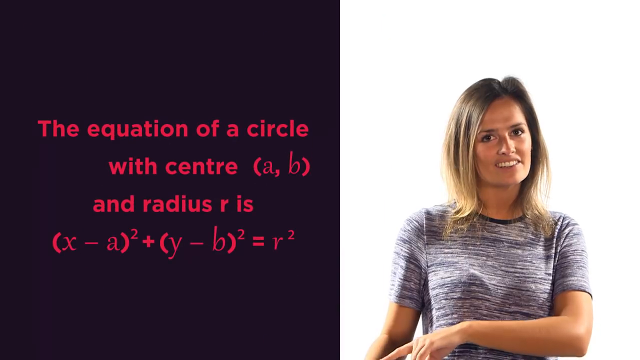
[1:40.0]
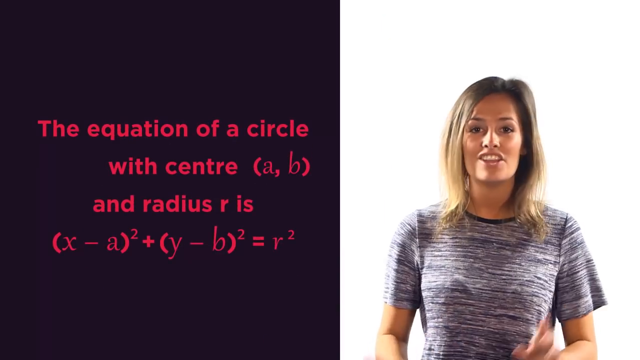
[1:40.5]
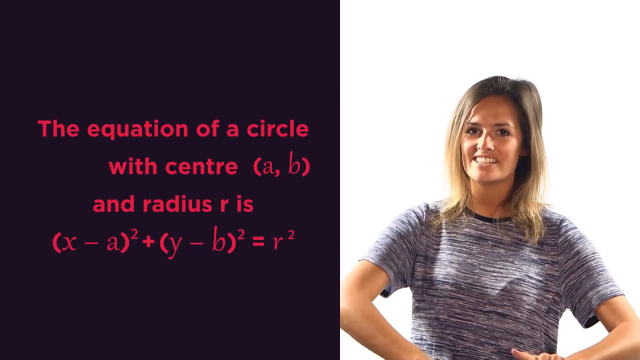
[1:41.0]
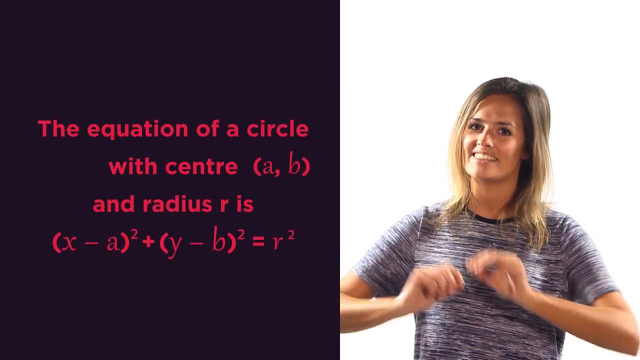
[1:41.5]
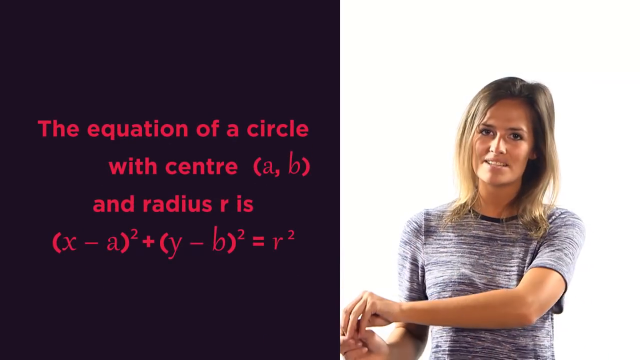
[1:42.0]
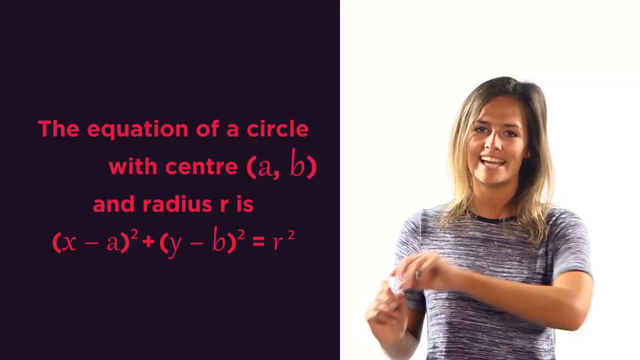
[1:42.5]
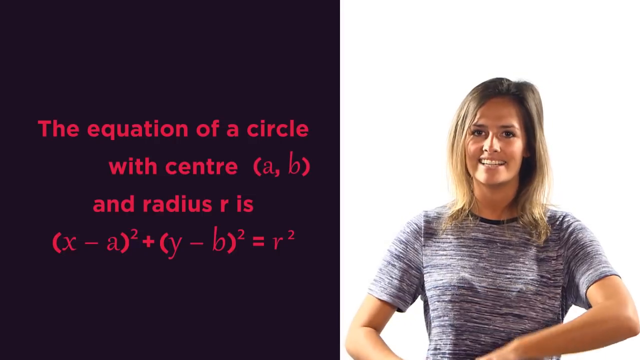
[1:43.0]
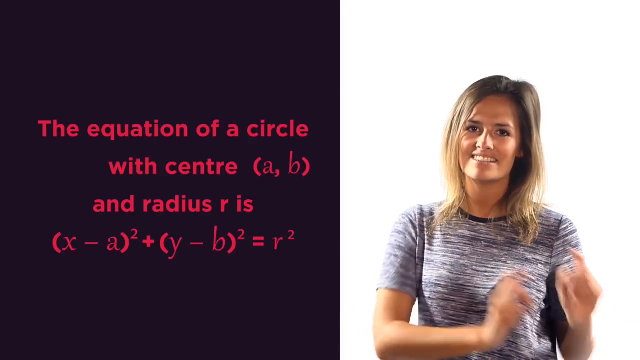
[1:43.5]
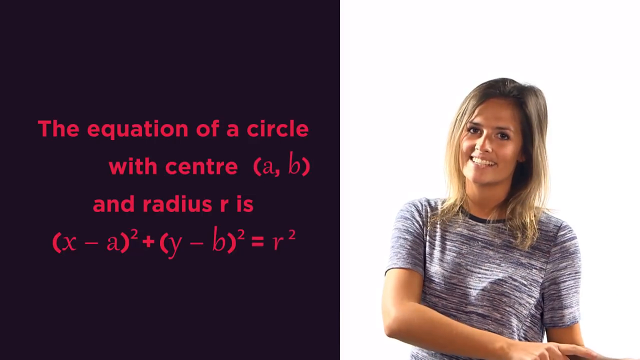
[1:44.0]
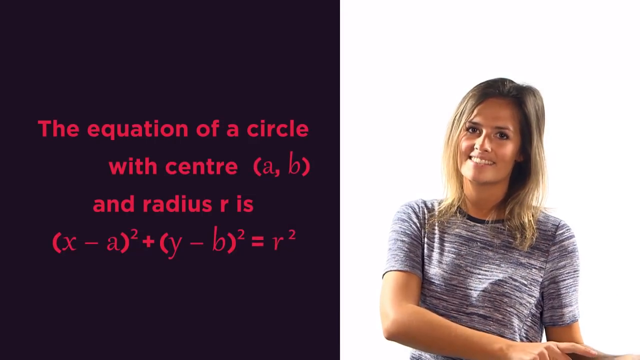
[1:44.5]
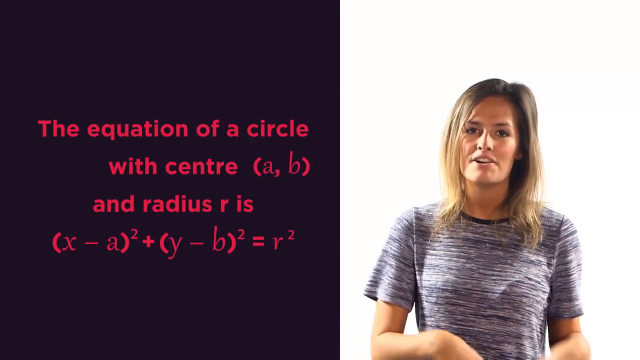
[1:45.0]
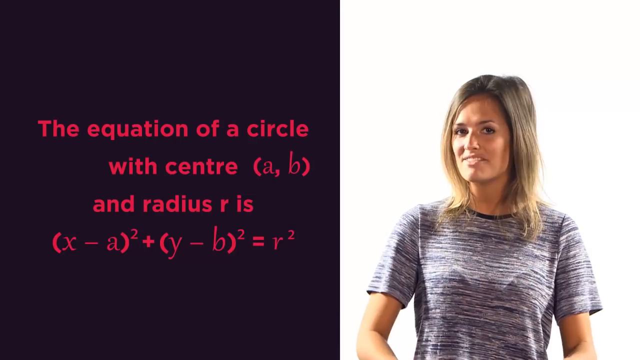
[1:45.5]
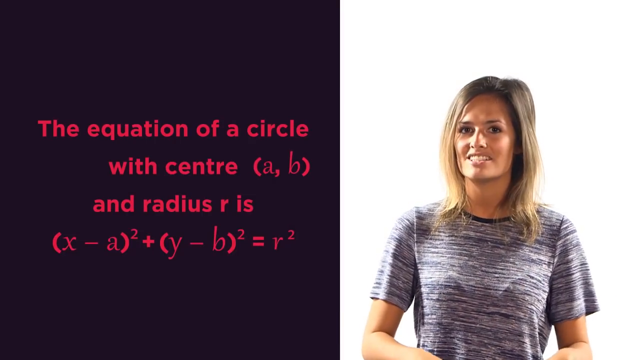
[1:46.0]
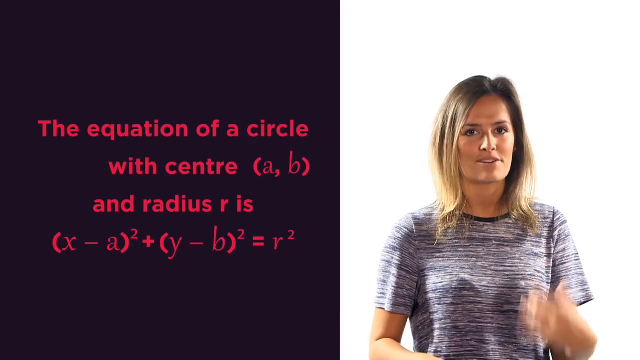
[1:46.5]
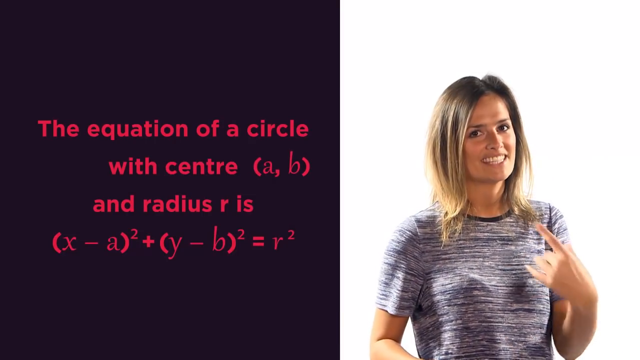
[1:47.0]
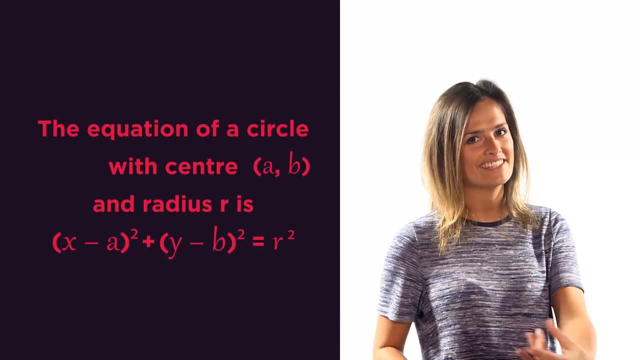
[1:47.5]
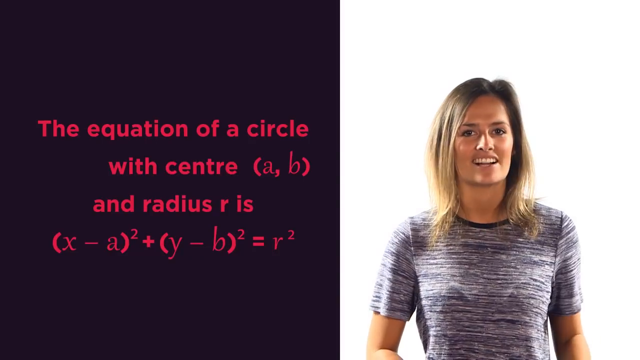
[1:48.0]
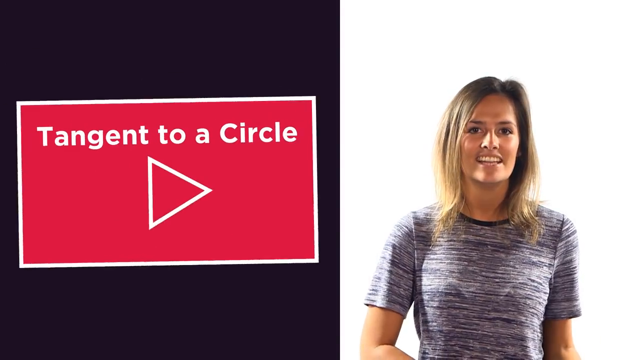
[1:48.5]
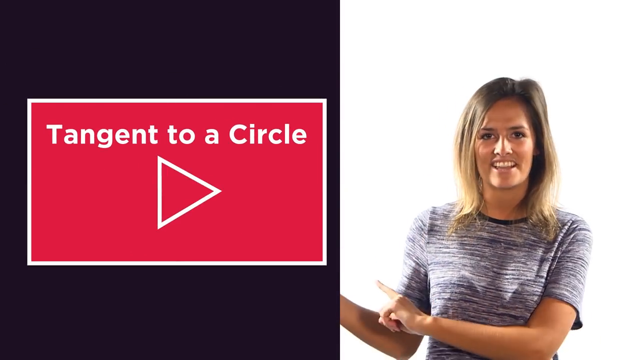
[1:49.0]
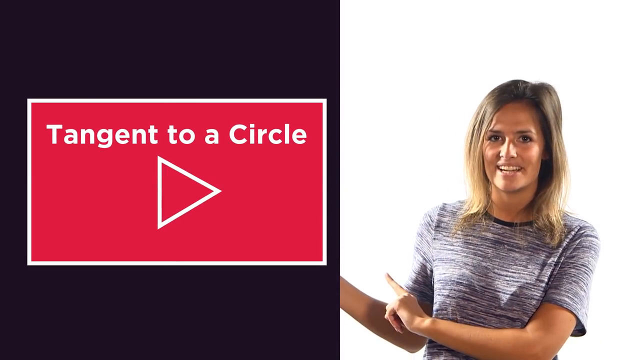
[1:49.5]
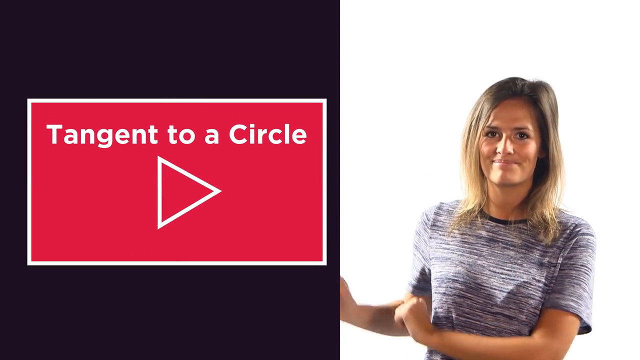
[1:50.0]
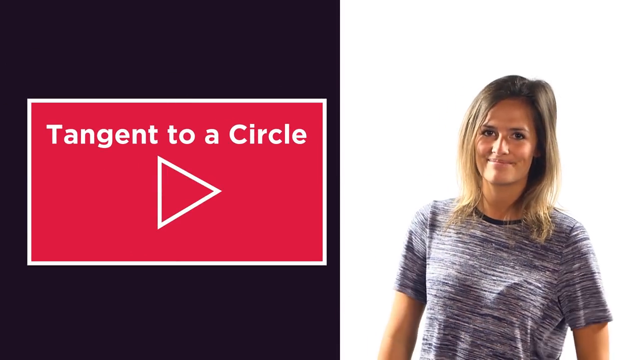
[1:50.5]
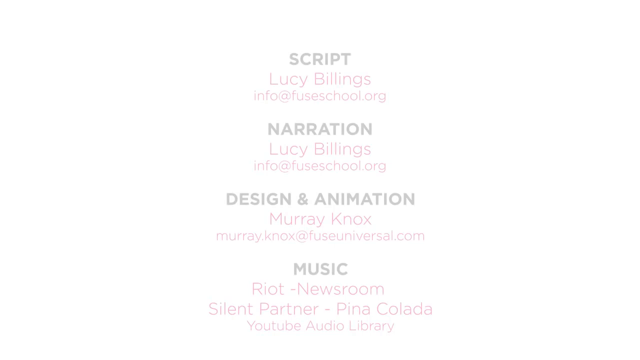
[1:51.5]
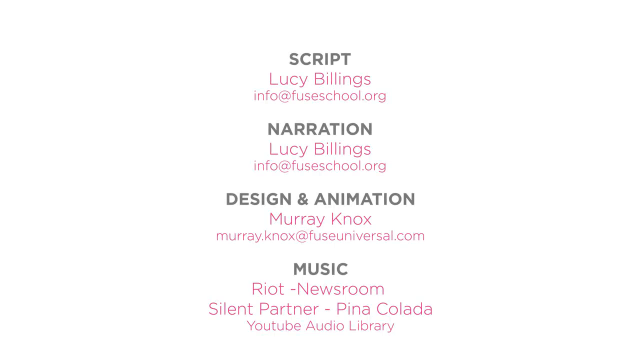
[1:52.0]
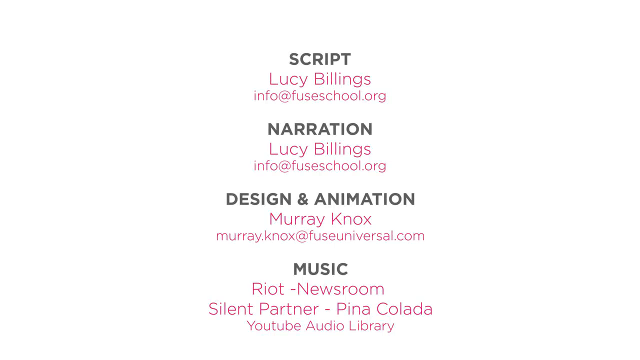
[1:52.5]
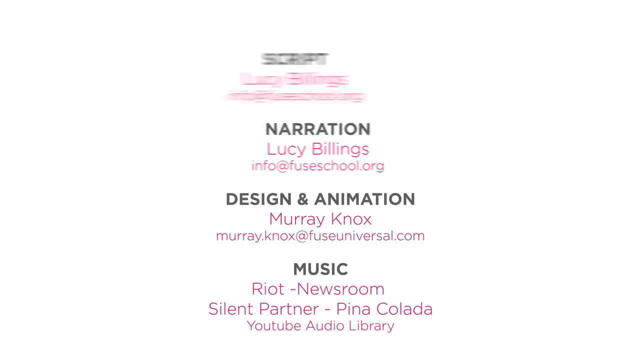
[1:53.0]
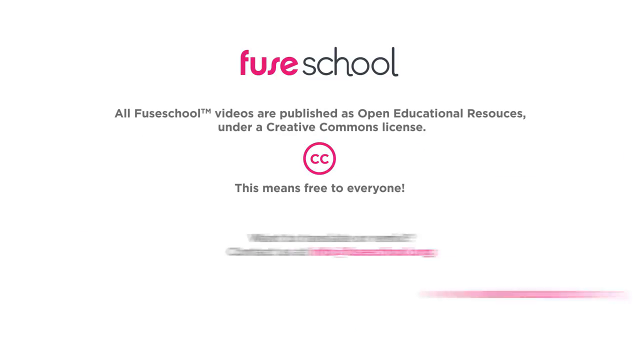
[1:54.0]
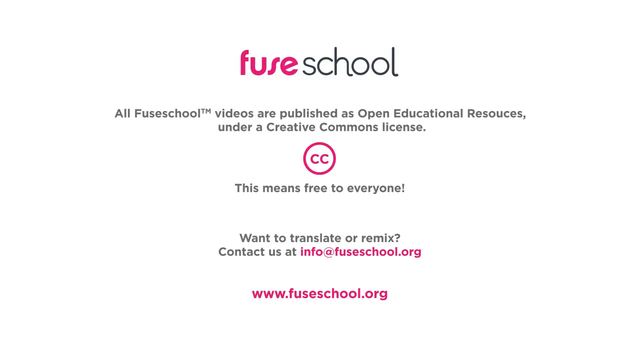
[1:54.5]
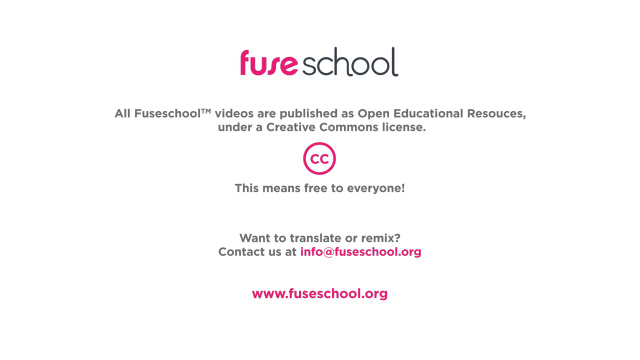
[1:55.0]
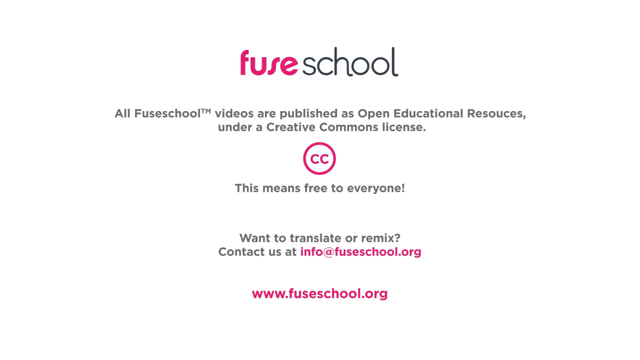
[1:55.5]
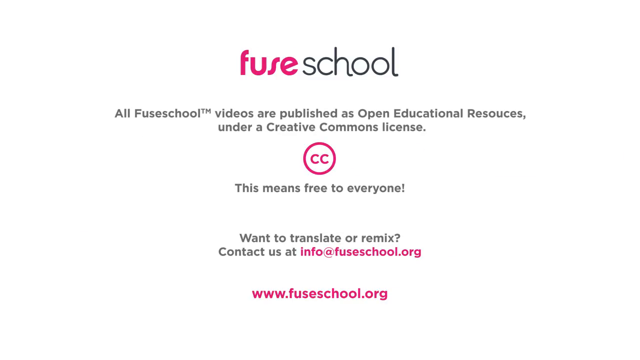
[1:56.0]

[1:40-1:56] The split screen continues: on the left, against a black background, red print reads "the equation of a circle with center a, b, and radius r is" (x − a)² + (y − b)² = r². On the right is the woman in the black and white striped shirt, who appears to be explaining more about the equation, pointing down at the ground and waving her hands a bit. A red square with a white border then appears on the dark left side; it has a triangle in it and white text reading "tangent to a circle". The woman points to it. Credits then roll: "script Lucy Billings, info at FuseSchool.org", "narration Lucy Billings, info at FuseSchool.org", "design and animation Marie Knox, marie.knoxx at FuseUniversal.com", and "music Riot Newsroom, Silent Partners", followed by the Creative Commons license for Fuse School. On a white background appears the Fuse School logo, written as one word with "Fuse" in pink and "school" in gray. Text reads "all Fuse School videos are published as open educational resources under a Creative Commons license. That means free to everyone. Want to translate or remix, contact us at info at FuseSchool.org", with the website "www.fuseschool.org". A pink Creative Commons logo, two Cs within a circle, is also on the screen.